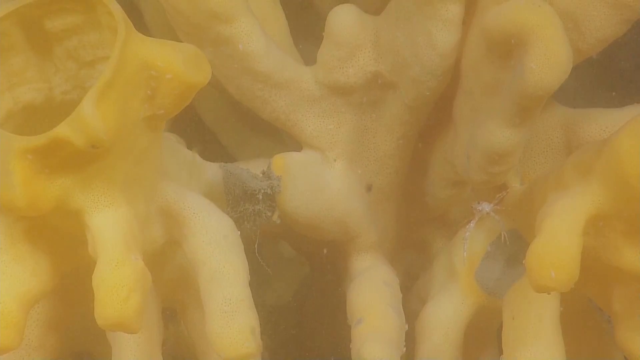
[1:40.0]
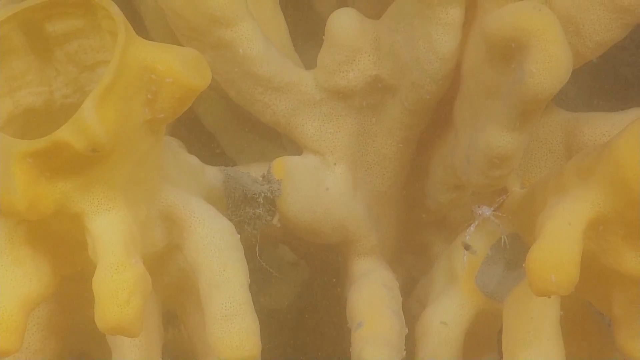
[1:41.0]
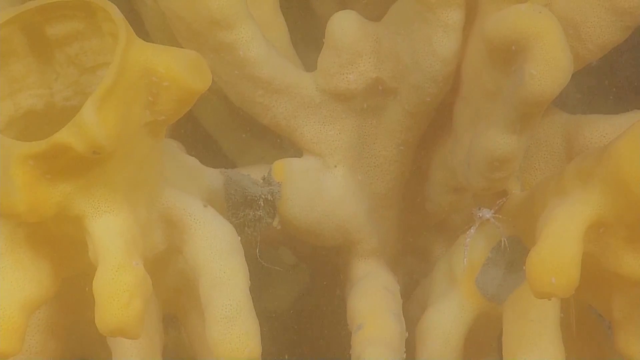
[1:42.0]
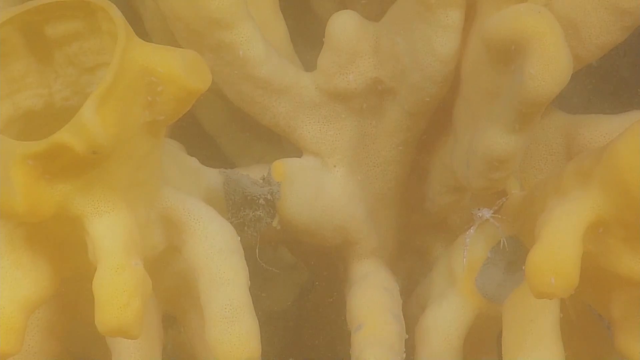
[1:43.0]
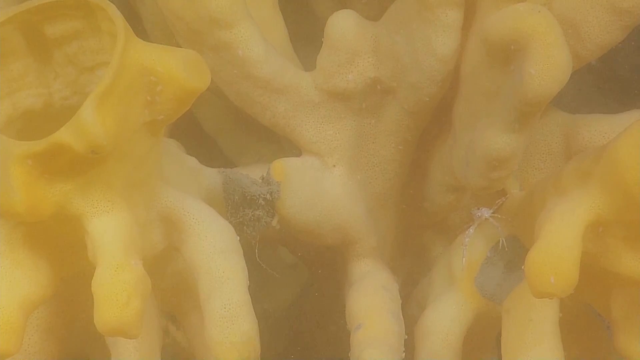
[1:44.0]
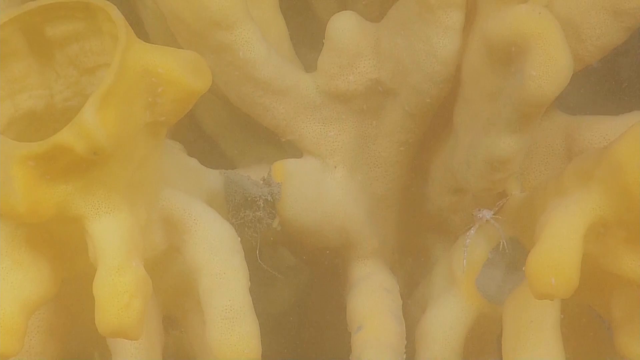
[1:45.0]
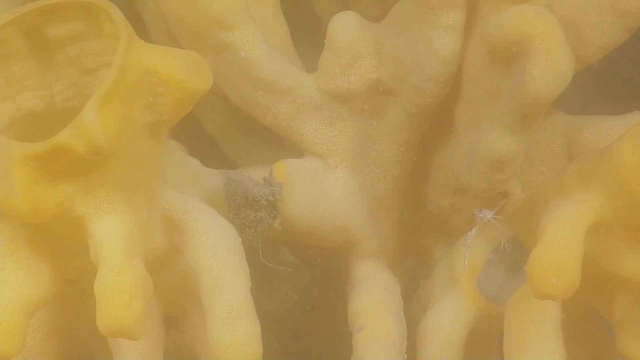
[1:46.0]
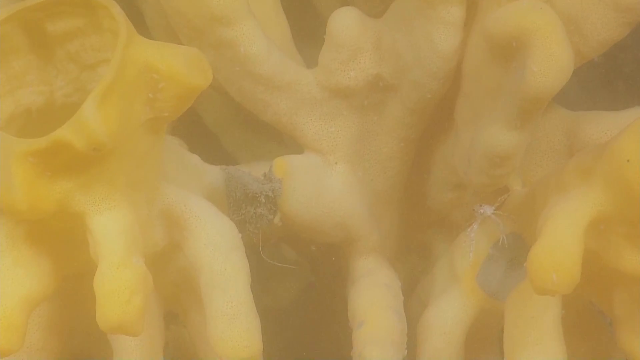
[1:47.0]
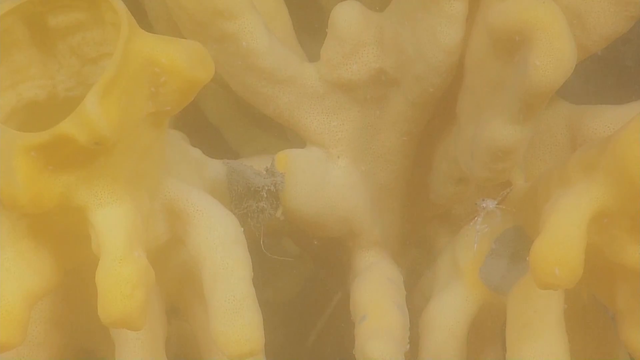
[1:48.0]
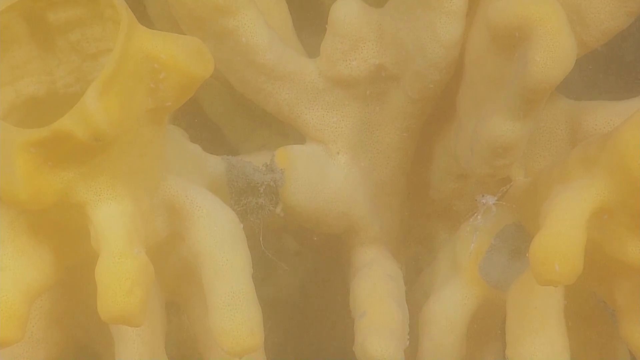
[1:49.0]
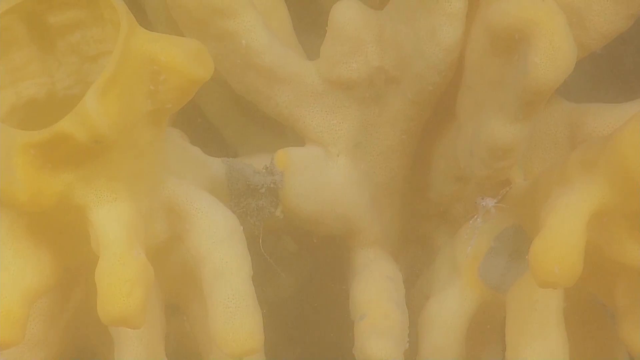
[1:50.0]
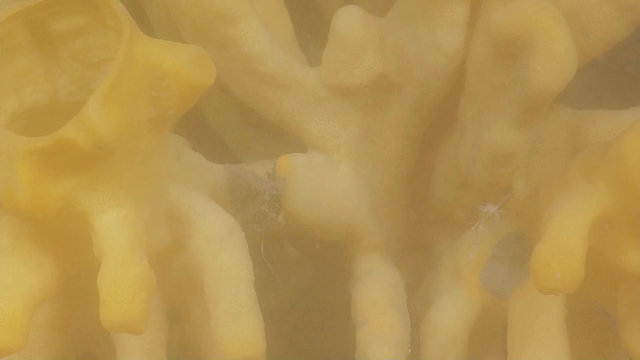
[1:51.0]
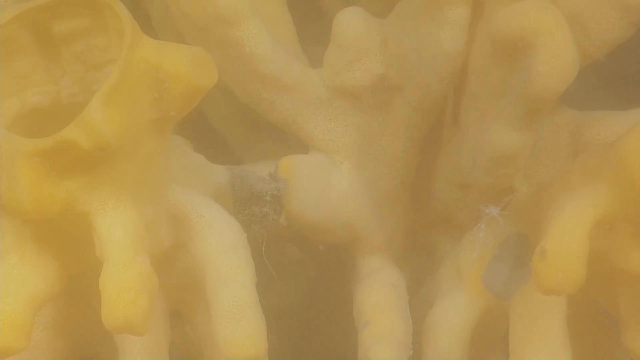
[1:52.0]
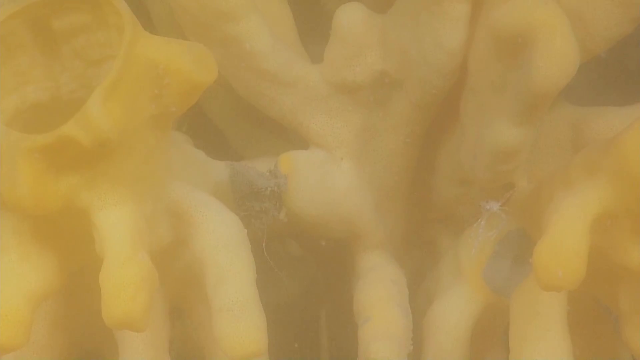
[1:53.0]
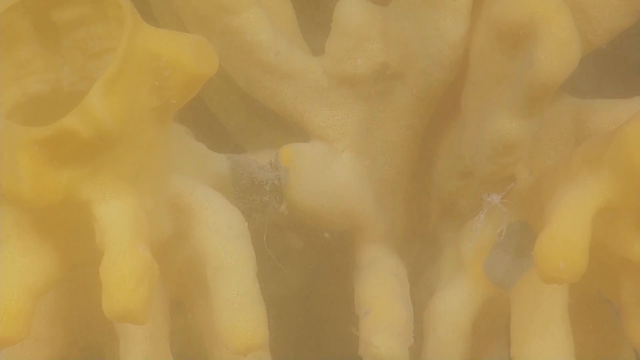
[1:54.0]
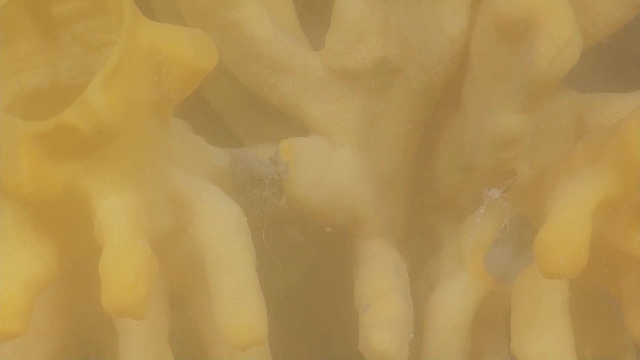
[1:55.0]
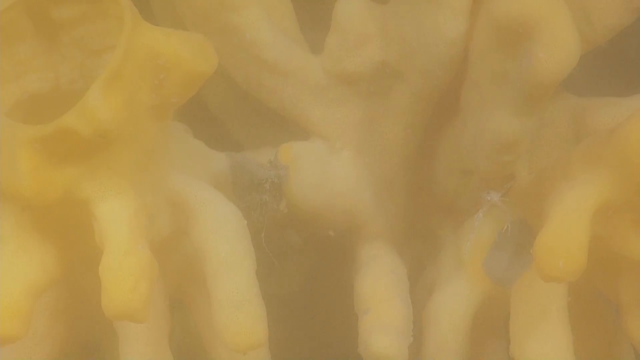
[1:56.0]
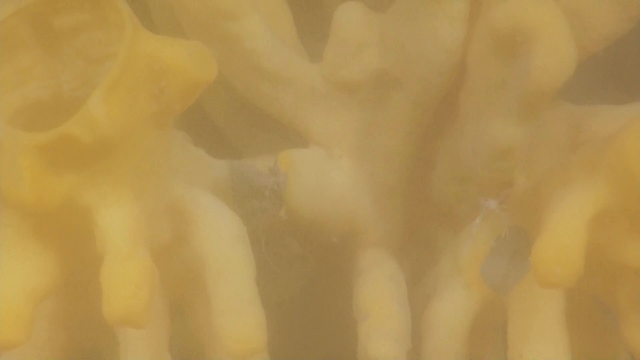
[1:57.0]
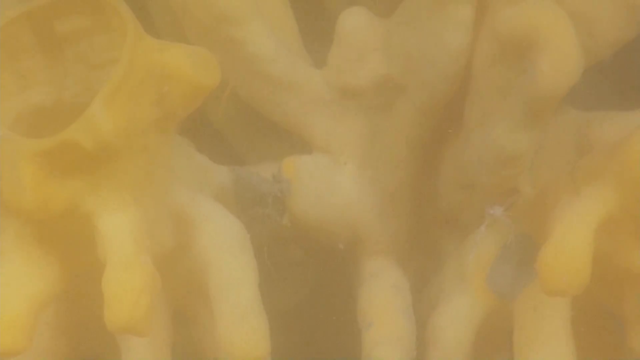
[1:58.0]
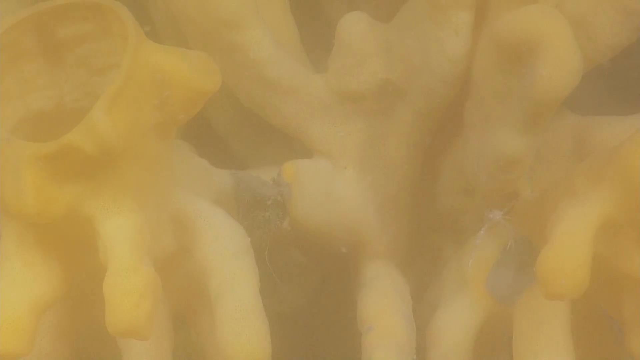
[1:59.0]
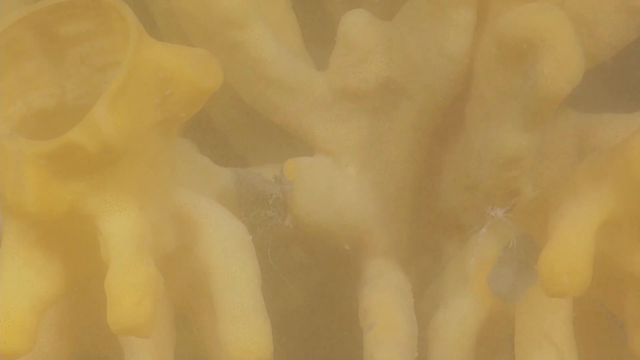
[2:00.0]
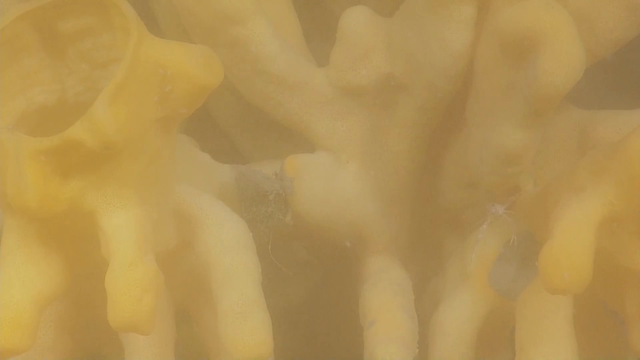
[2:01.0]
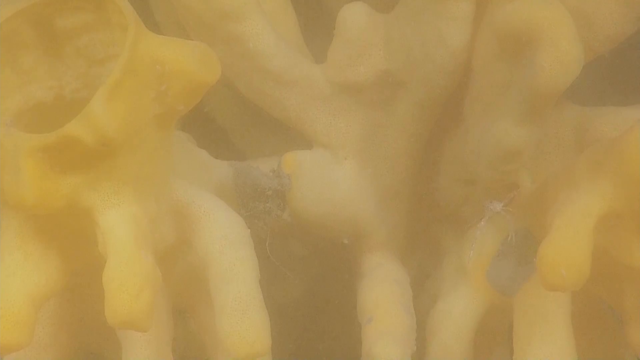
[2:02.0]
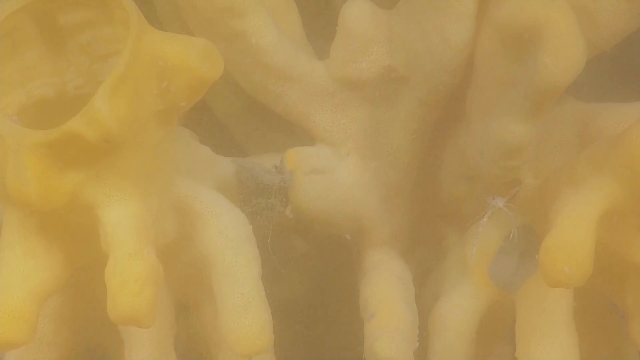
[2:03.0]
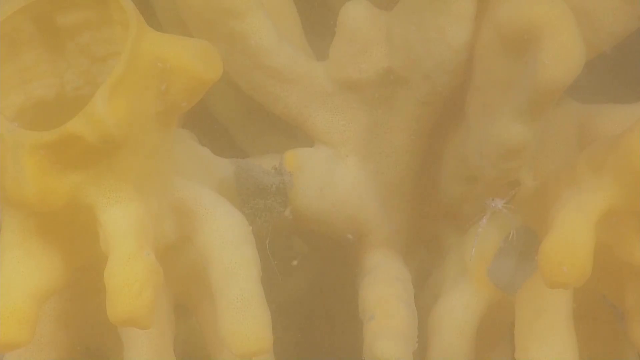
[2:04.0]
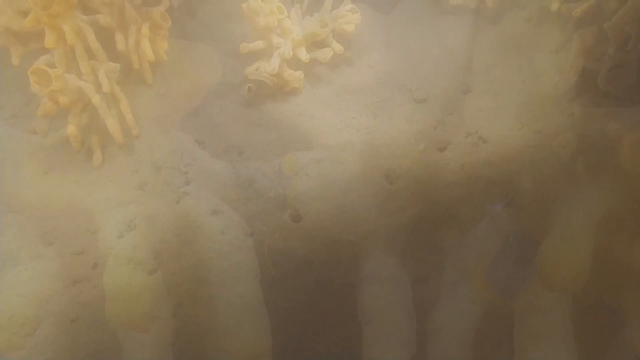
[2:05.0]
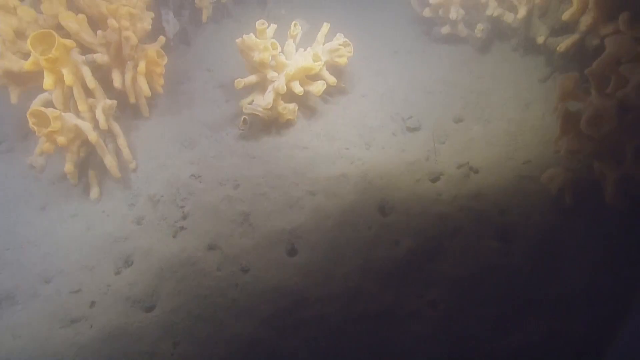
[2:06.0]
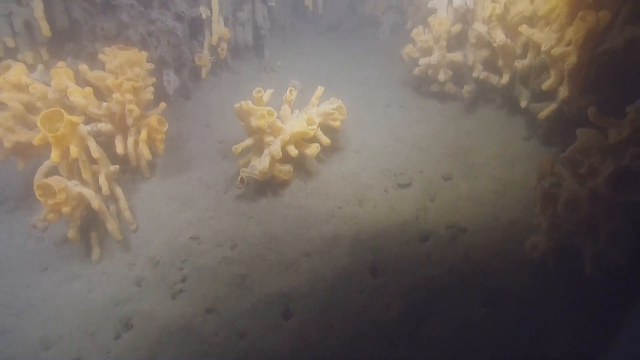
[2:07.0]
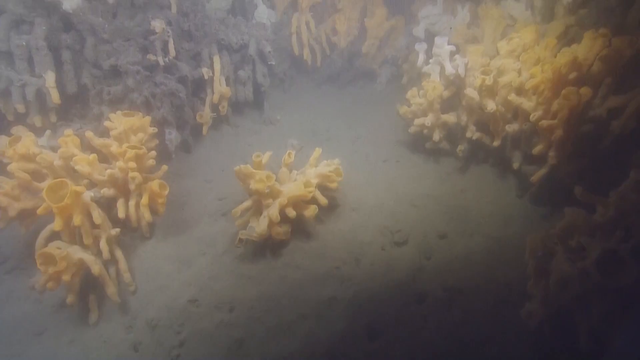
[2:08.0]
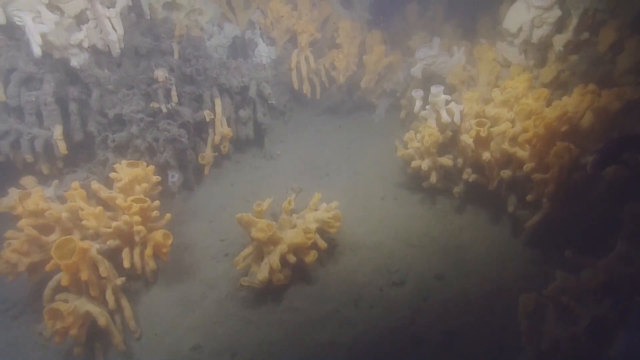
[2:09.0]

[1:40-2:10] The live submarine video shows an extreme profile of a yellow and white coral, which looks like it has one or two joints colored gray. Many microorganisms float in the cloudy water in front of the coral. The shot transitions to new footage that starts at the bottom of the seafloor and moves up, showing more coral: a large piece on the left of the screen, a smaller one in the middle, and much more coral at the far top right. The coral is divided by a somewhat gray sandy floor. The shot moves up and shows an abundance of coral at the top of the screen, and a fish slowly swims into the screen from the center right.